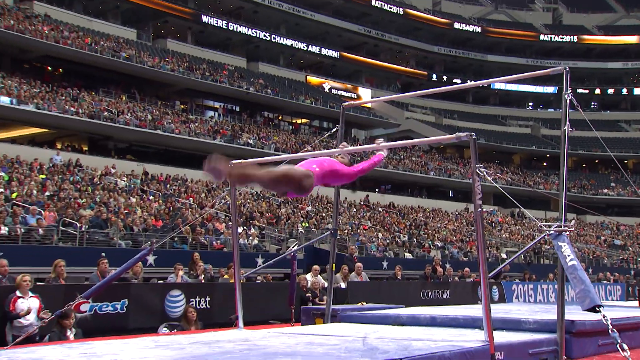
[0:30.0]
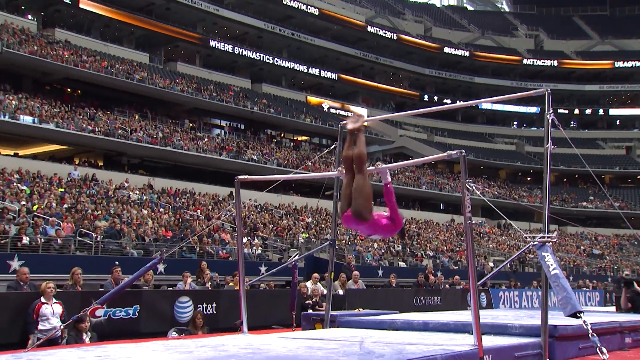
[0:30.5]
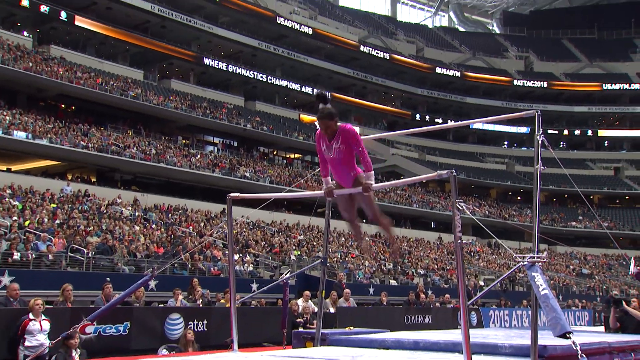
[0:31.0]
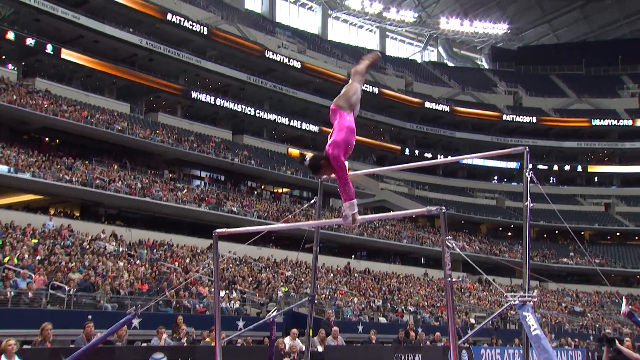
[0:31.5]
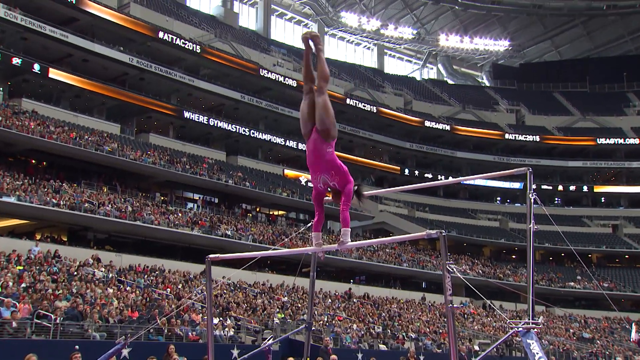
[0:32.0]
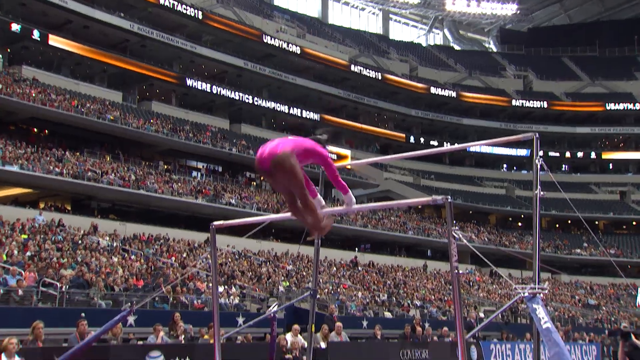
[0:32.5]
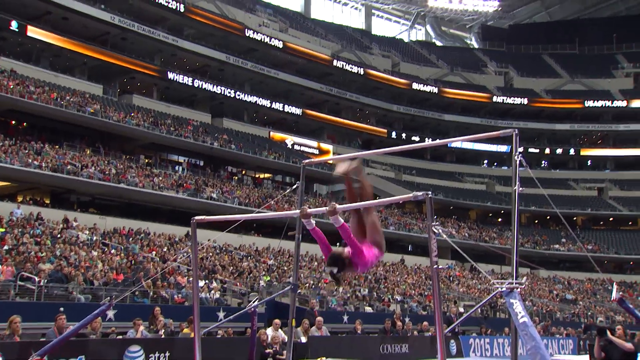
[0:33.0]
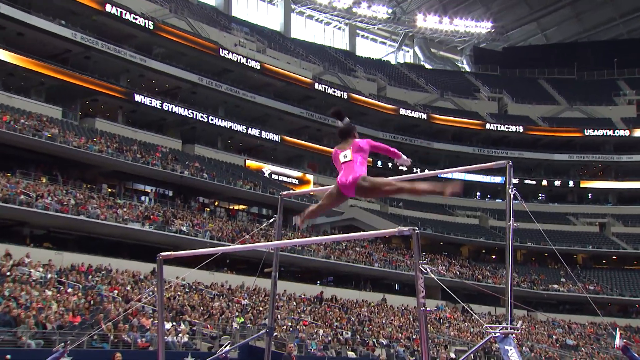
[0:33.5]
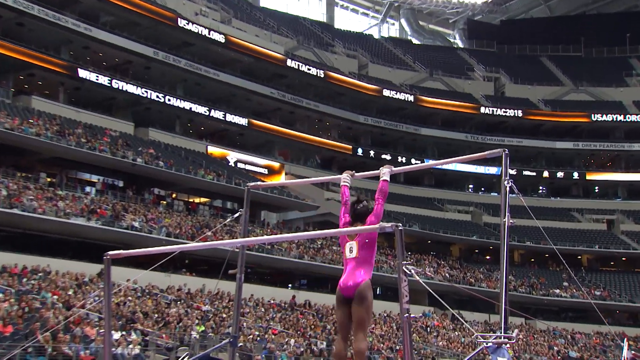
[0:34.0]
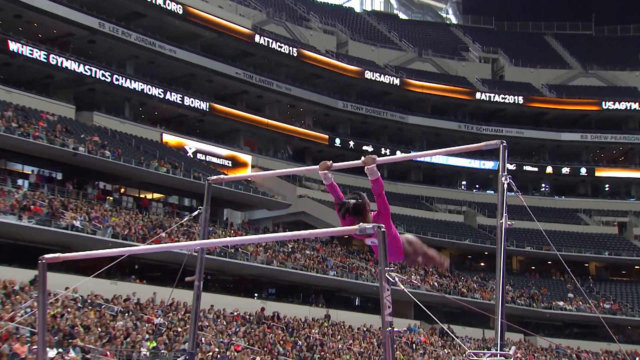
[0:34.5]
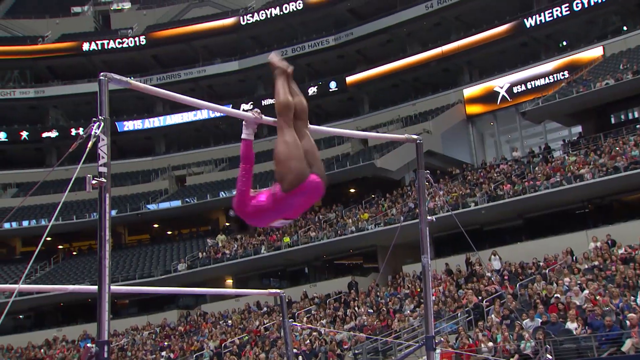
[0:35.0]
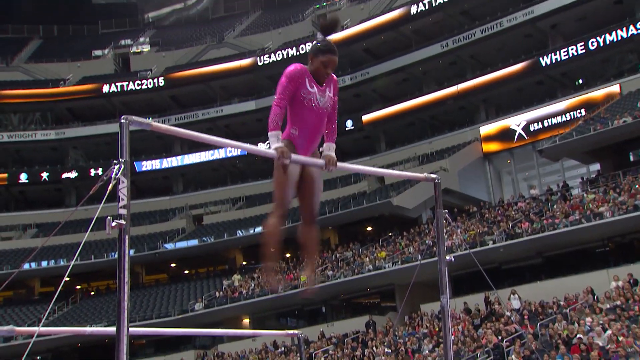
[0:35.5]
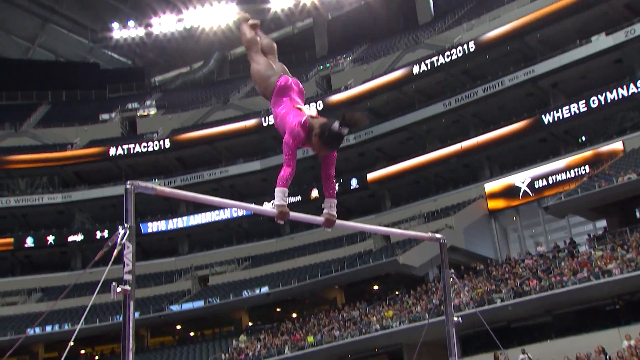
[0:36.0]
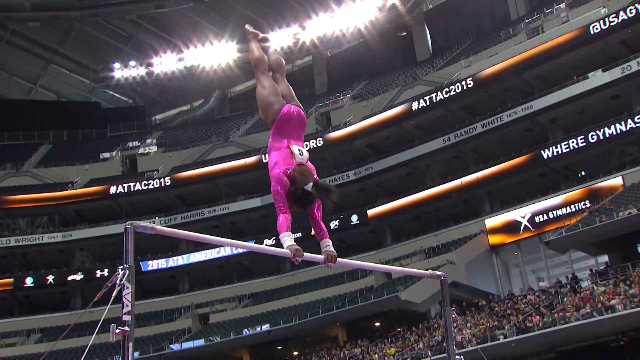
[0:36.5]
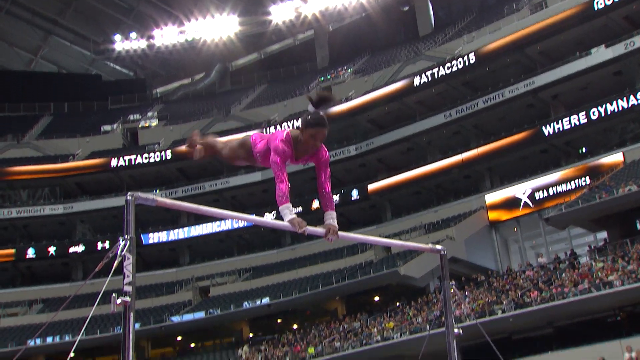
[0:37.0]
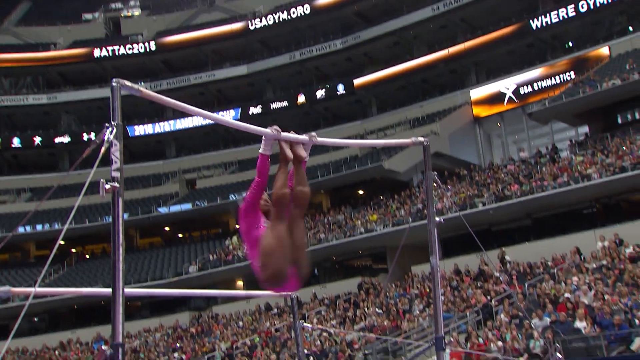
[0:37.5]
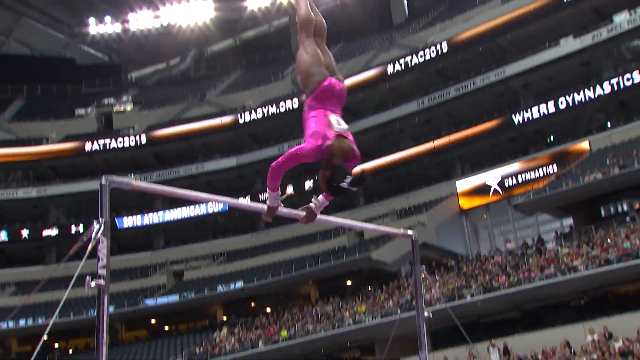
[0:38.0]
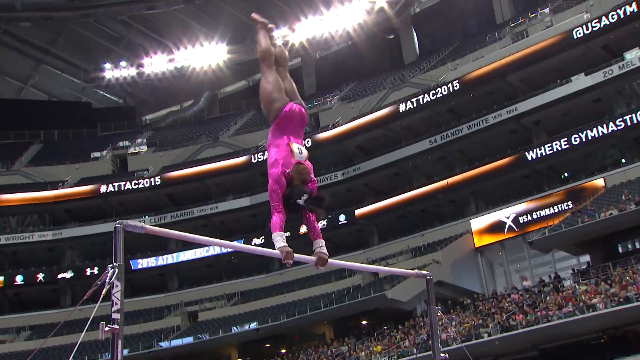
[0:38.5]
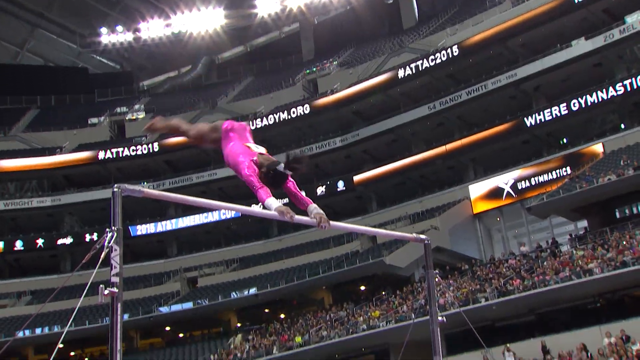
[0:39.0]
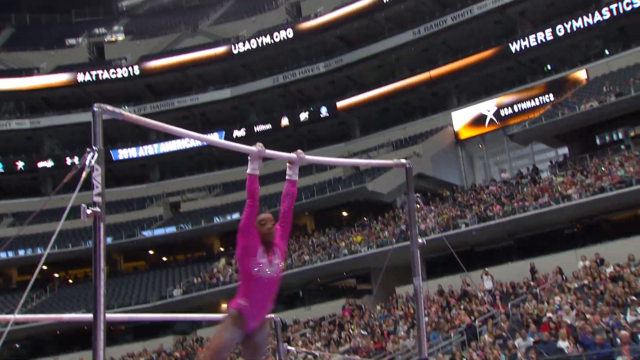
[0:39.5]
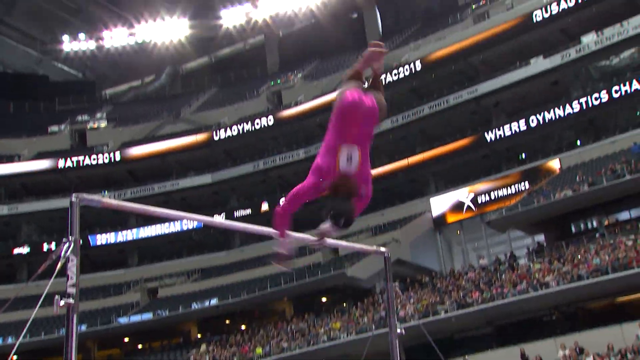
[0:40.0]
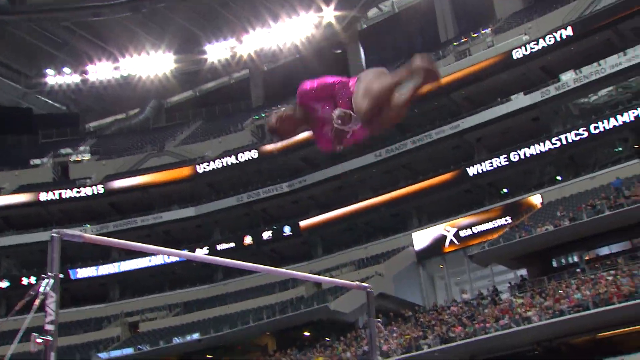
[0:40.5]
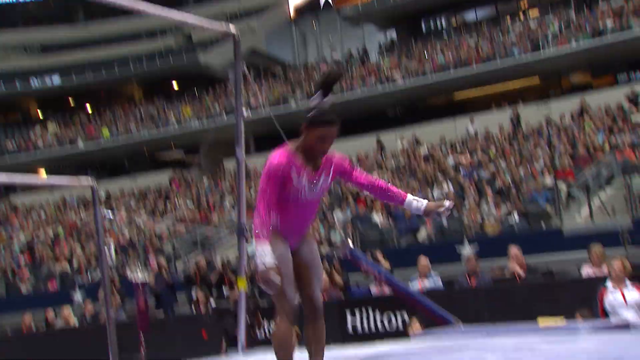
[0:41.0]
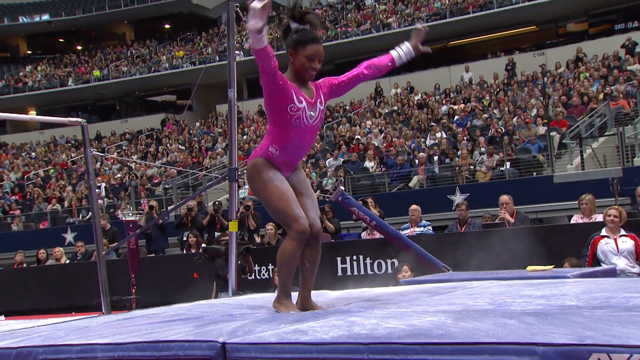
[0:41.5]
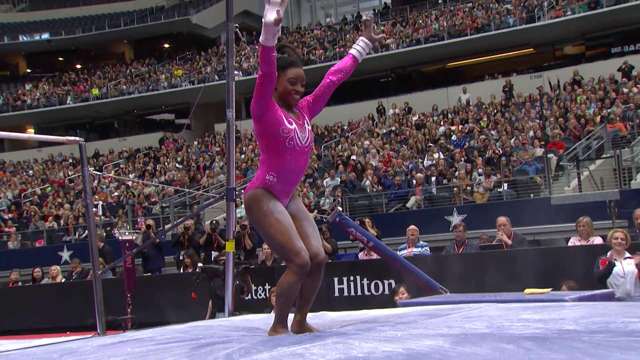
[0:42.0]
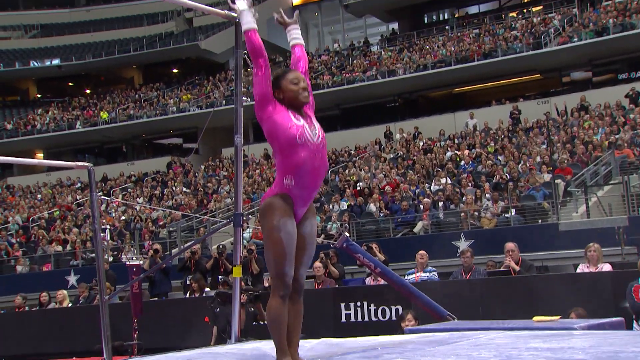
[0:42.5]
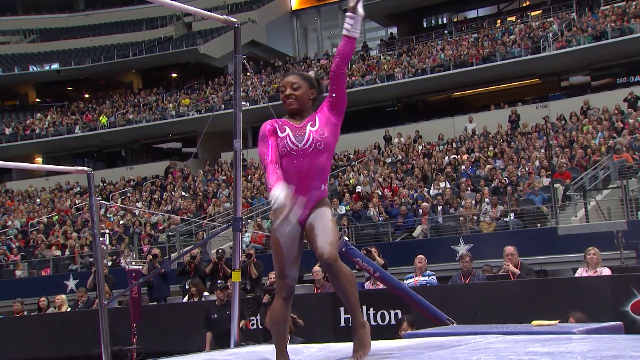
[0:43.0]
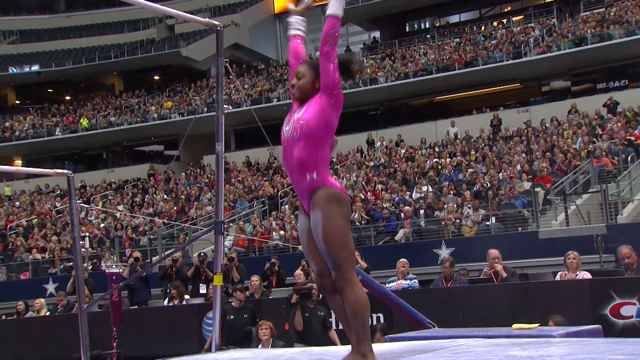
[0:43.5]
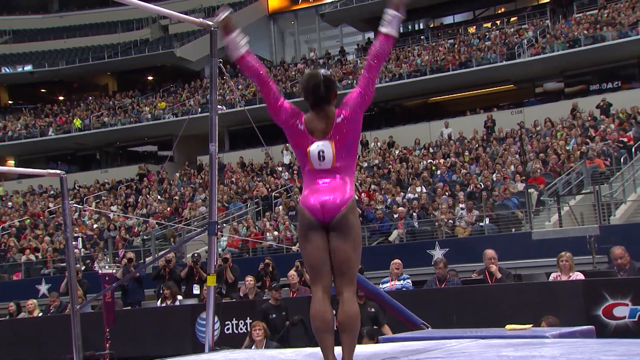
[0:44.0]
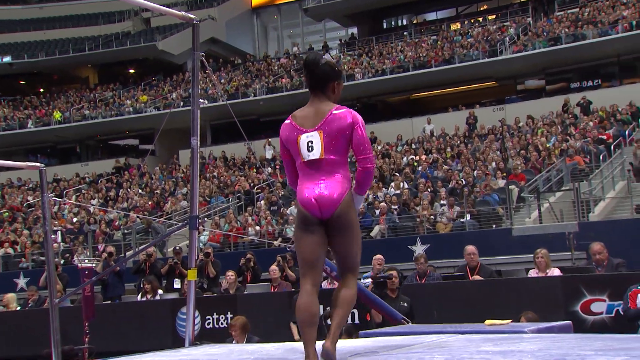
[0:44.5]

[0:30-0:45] The gymnast is on the first, ground-level bar, but only briefly; she spins back up and over, latching onto the second bar again. She spends a good bit of air time in suspension, then does a couple more spins, gripping the bar tightly with her legs firmly together. She concludes by spinning under the bar and jumping into the air, doing something like a double or triple flip before landing on the mat right on her feet. She does a little celebration, puts her hands in the air, looks around, and does a little hop. In the background there is apparently a line of judges, along with some cameramen.